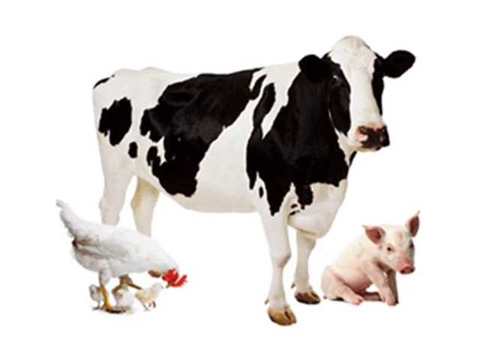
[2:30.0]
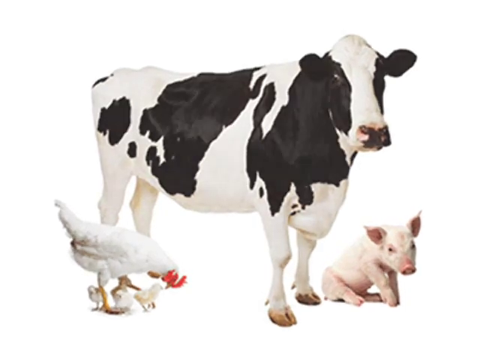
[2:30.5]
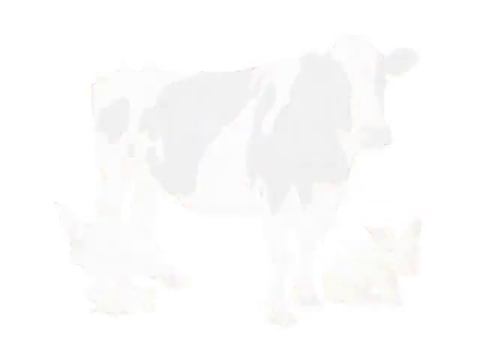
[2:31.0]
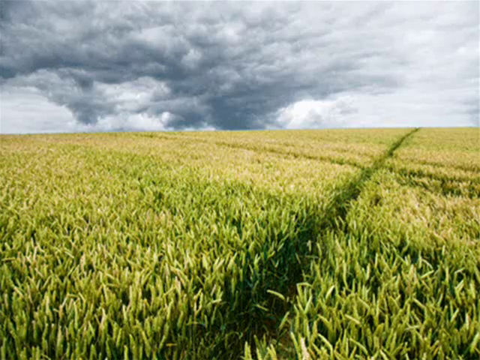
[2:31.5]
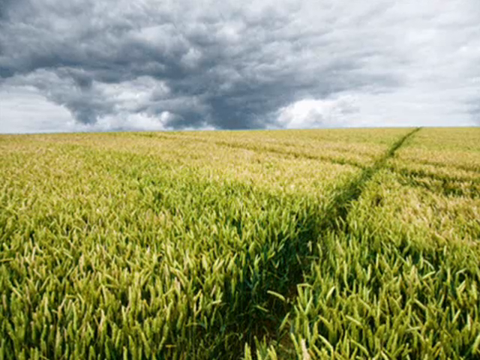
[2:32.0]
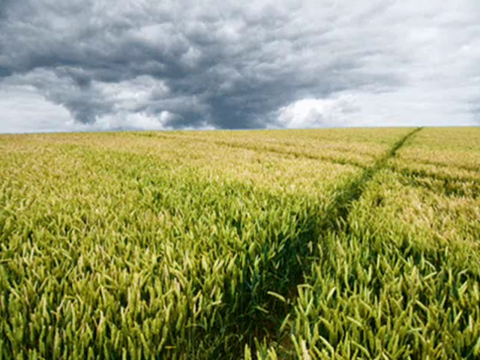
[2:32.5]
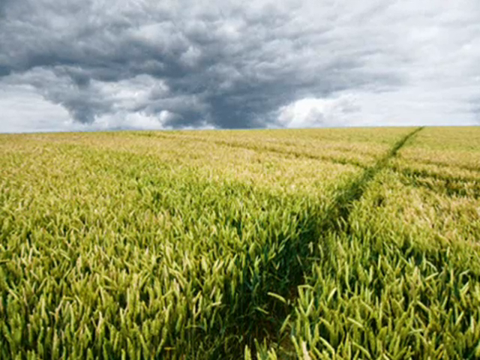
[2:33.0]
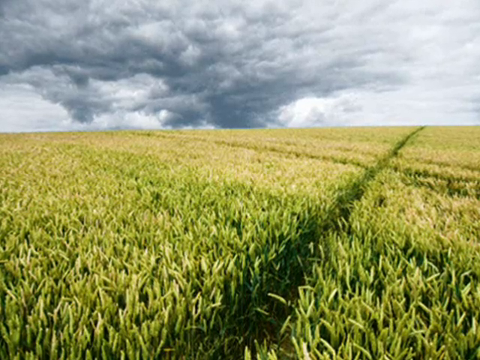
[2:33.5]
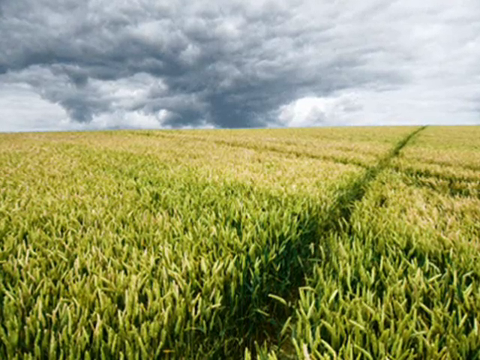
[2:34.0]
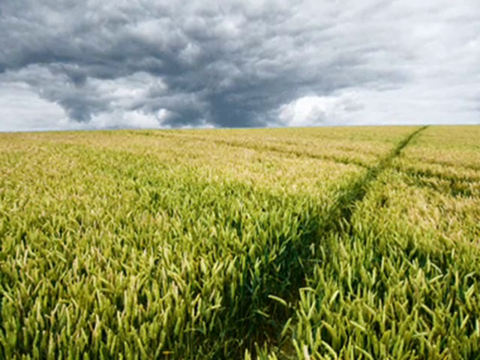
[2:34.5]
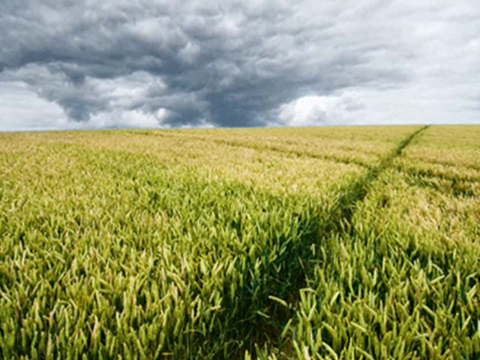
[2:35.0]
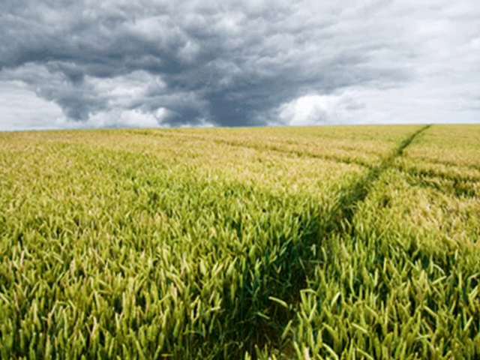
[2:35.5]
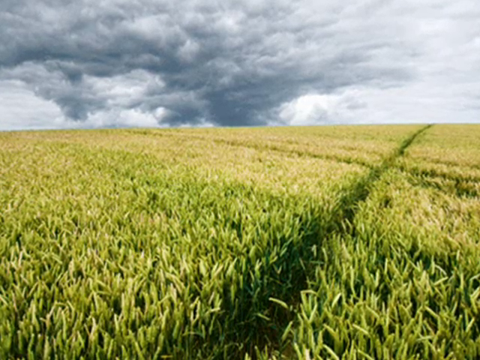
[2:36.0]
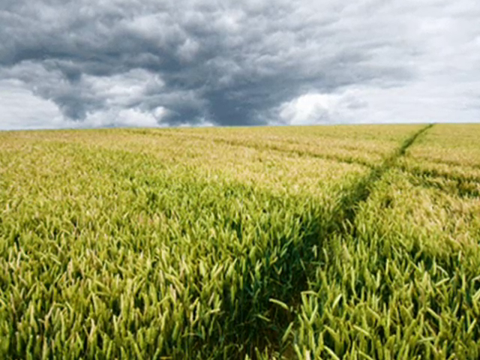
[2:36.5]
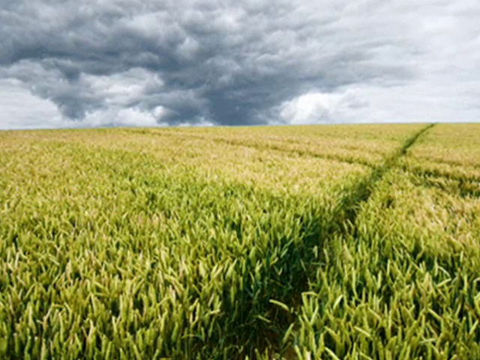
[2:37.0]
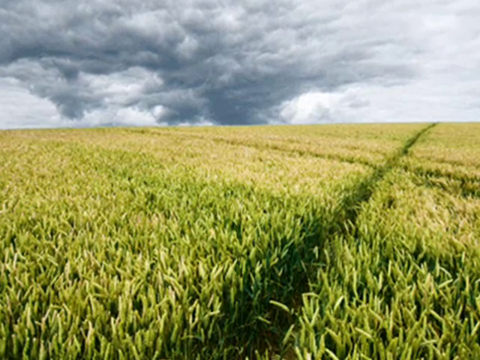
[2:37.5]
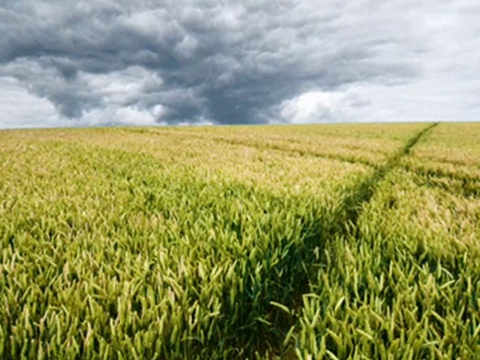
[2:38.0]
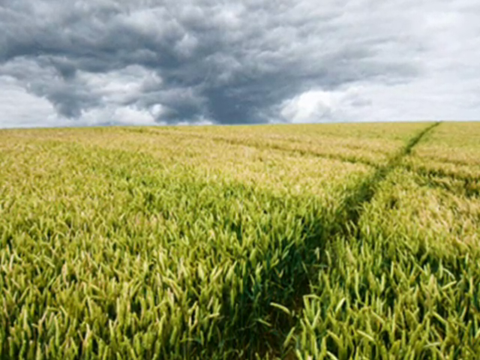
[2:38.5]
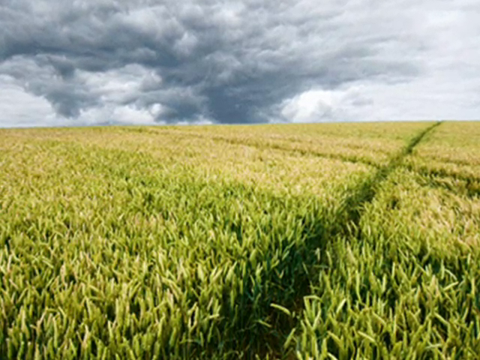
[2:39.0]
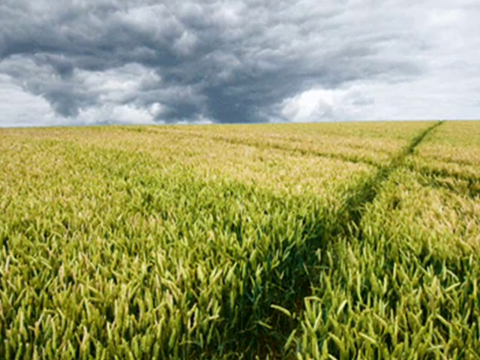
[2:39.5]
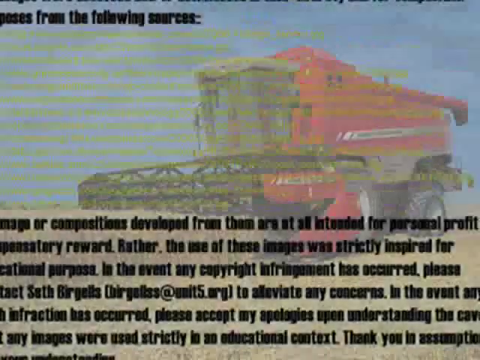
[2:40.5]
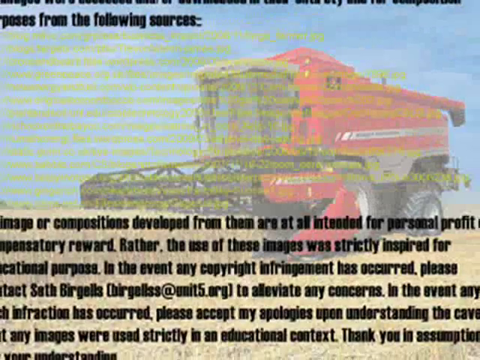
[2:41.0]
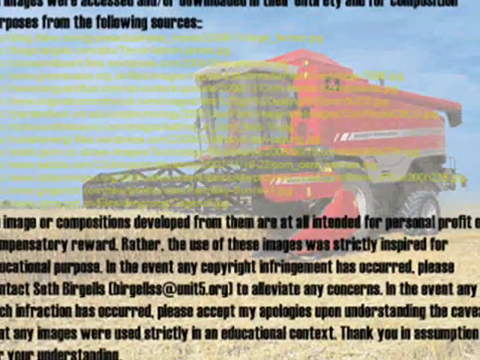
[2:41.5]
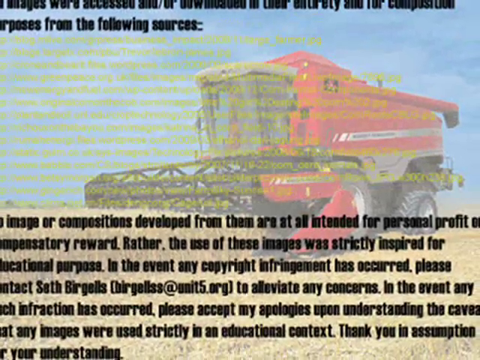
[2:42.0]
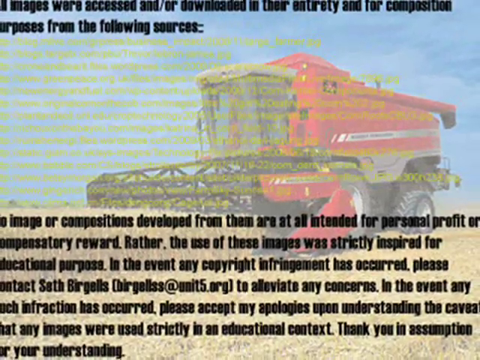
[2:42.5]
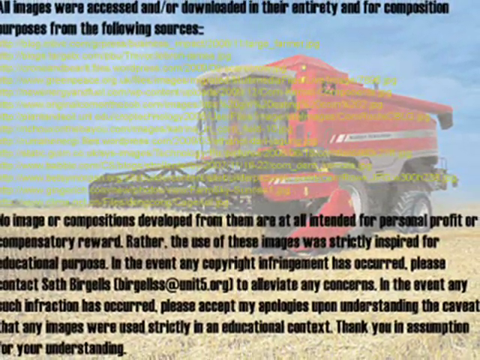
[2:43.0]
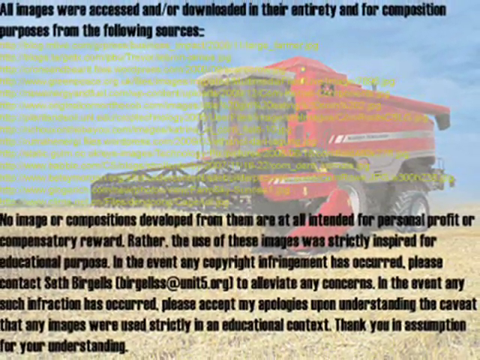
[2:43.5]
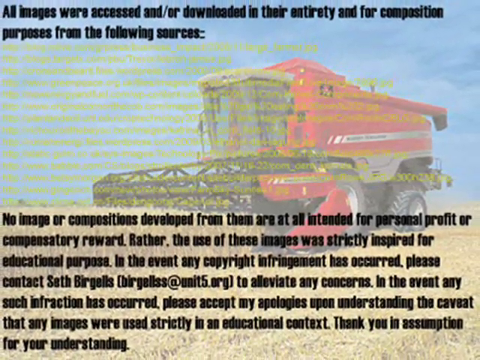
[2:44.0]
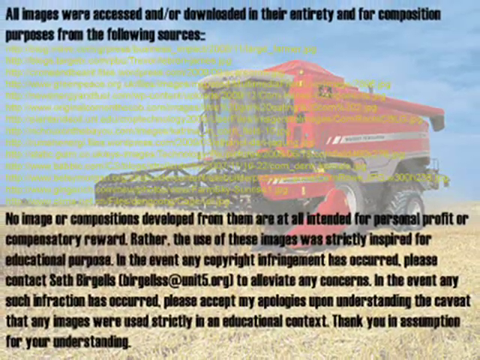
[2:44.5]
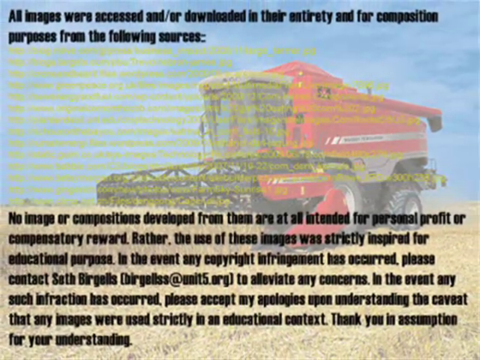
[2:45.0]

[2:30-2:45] The cow, pig, chicken, and chicks on the white background are still shown. Then a cornfield appears under low clouds that look like rain clouds, possibly thunderstorms coming in; the setting is possibly the Midwest. The field of corn stretches as far as the horizon. Next, a harvesting tractor is shown with a statement that says "all images were accessed or downloaded in their entirety for composition purposes for the following source." Below it is another statement in smaller print that is hard to read. The ending gives credits for the photos in the presentation.